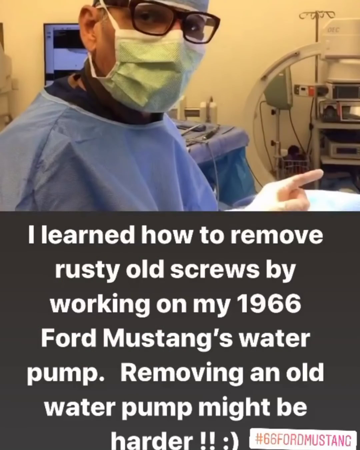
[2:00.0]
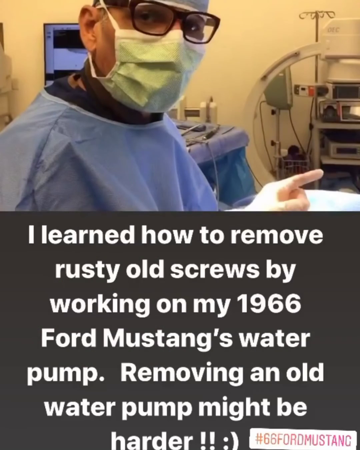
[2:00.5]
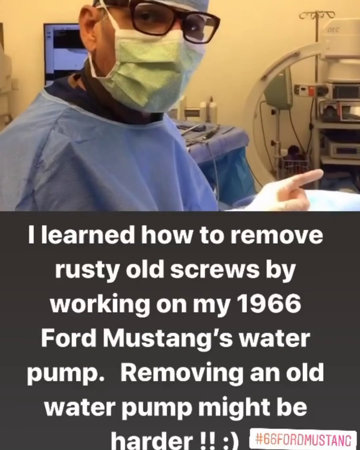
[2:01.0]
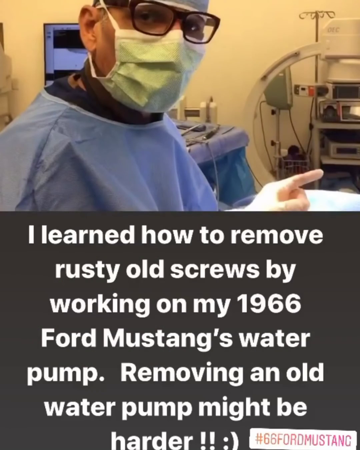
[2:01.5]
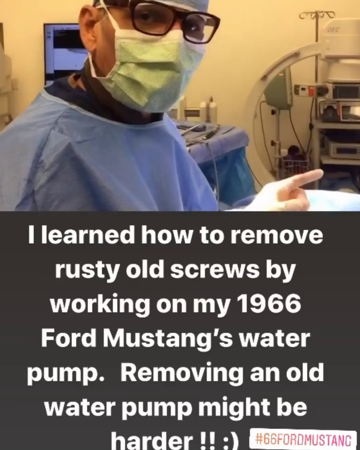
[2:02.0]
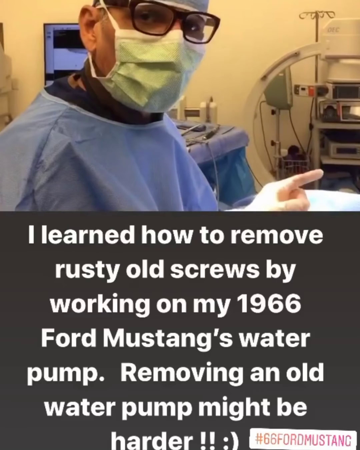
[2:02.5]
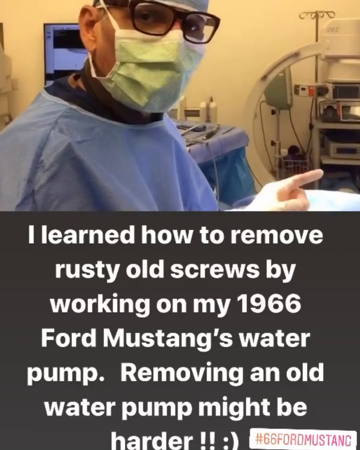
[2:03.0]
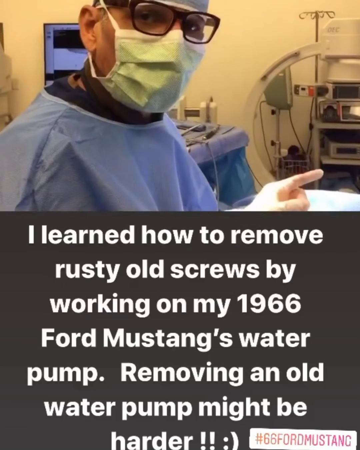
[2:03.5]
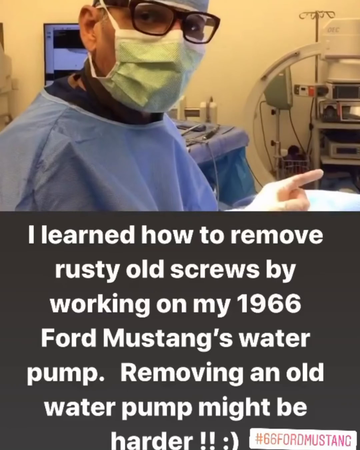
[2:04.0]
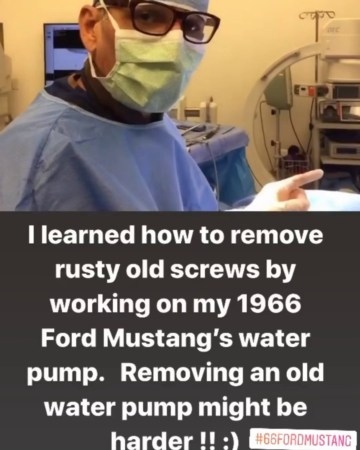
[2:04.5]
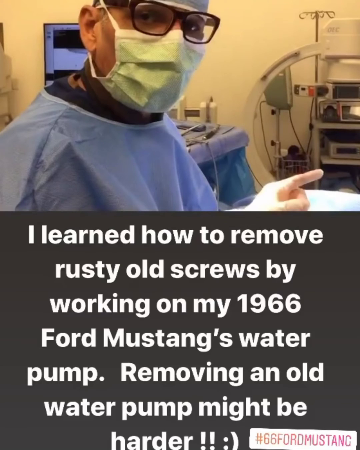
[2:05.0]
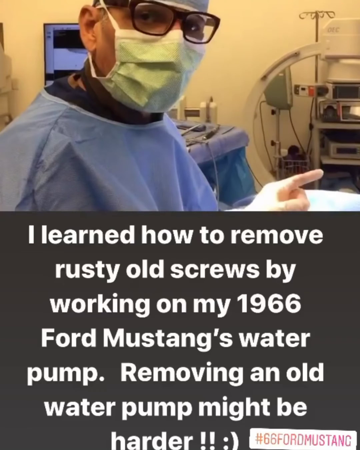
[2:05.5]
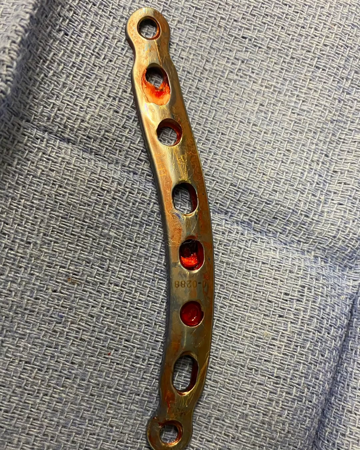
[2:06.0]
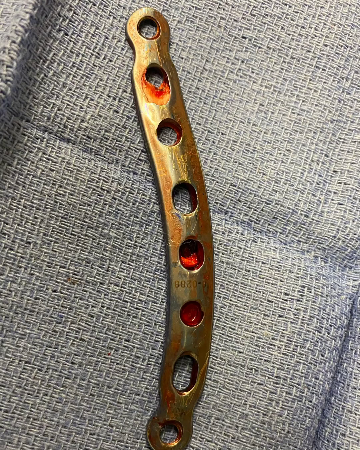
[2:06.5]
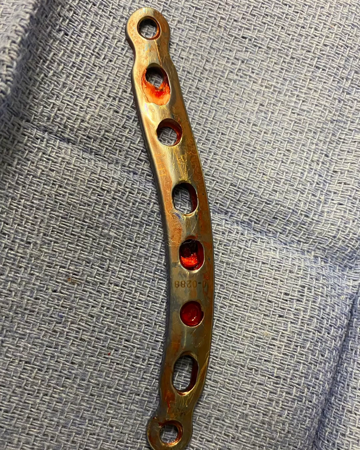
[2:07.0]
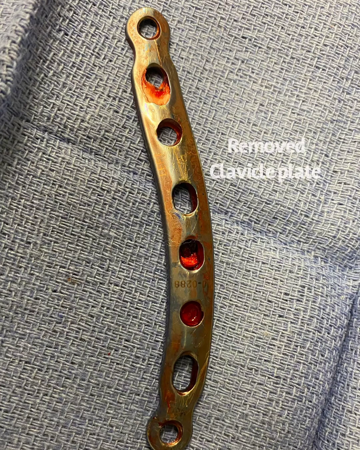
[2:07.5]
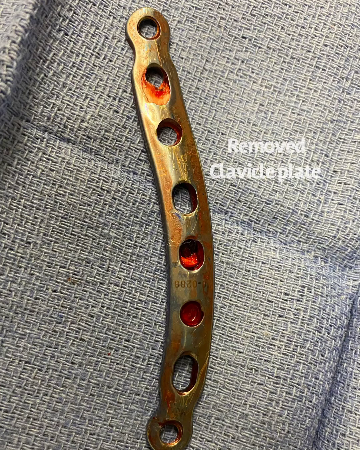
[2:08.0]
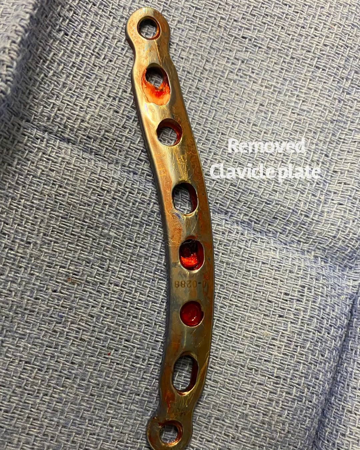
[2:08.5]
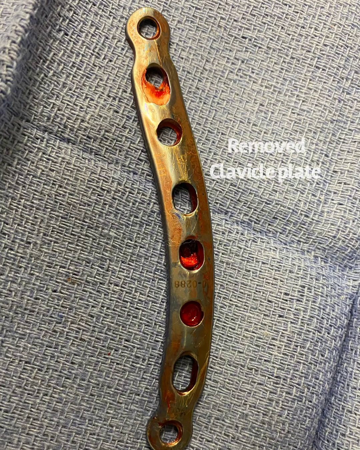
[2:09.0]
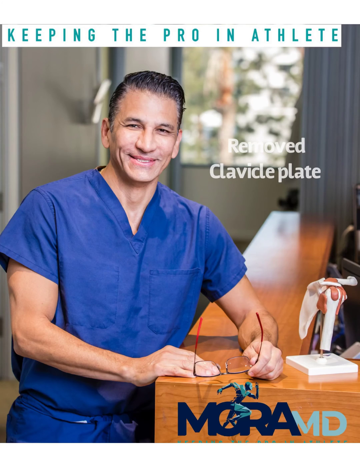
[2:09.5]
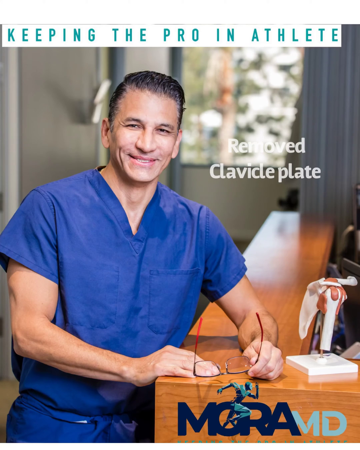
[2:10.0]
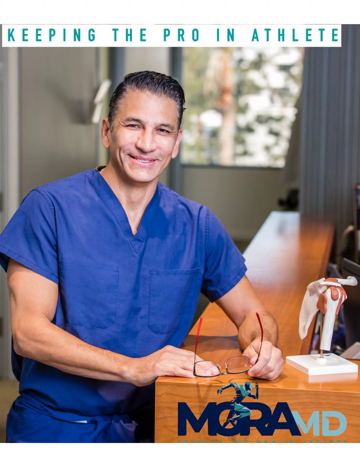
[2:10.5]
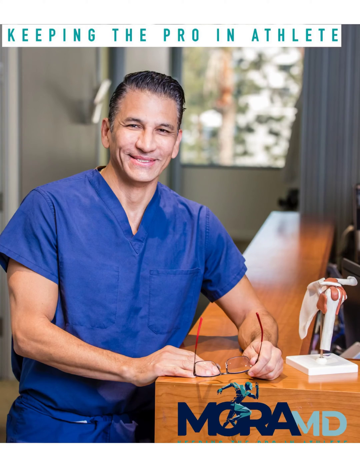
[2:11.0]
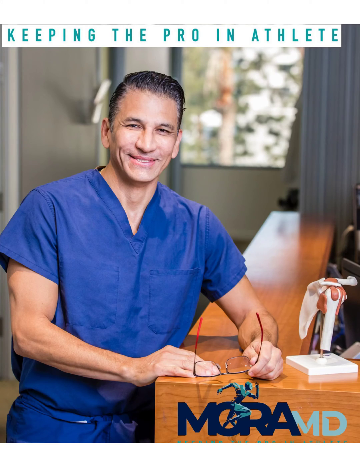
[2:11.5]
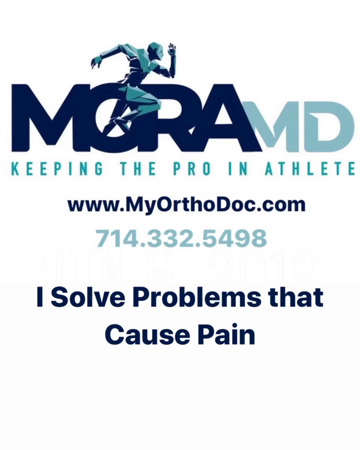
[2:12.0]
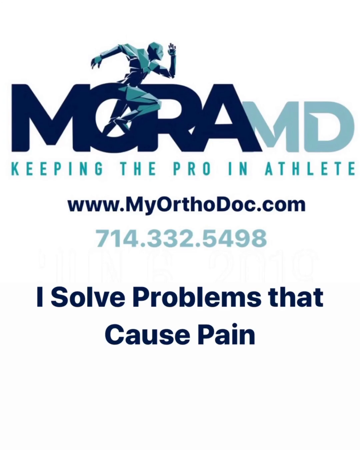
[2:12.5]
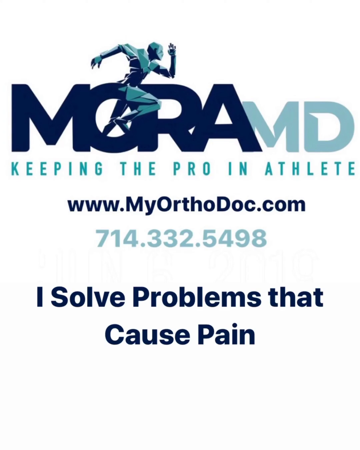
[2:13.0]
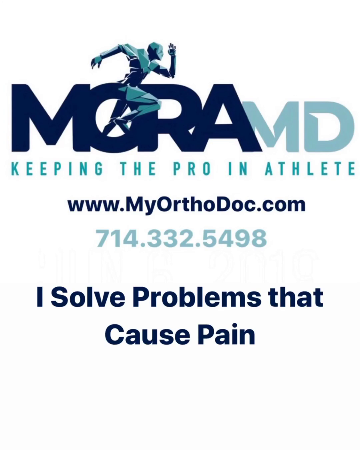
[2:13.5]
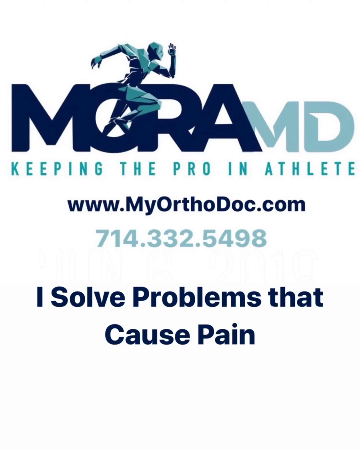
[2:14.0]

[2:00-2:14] A split screen shows a photo of the doctor on the top half and, on the bottom, text on a gray background reading "I learned how to remove rusty old screws by working on my 1966 Ford Mustang's water pump." The view transitions to a picture of the metal device pulled from the patient: a long, slender device that appears to be about two to three inches long, likely silver or gray and discolored inside the body. It has seven holes, two of them completely blocked by human tissue or blood. The device is laying on a woven blue fabric, with text next to it reading "removed clavicle plate." A still shot then shows the doctor, probably Dr. Mora, standing in blue scrubs and leaning on a wooden shelf or desk, holding glasses in his left hand that appear to have red arms and black frames. He is smiling. Text above him reads "keep being the pro in athlete," with "removed clavicle plate" in lighter white text. Beyond him is a window and a blue curtain that appears to be open, and a notepad is visible on the desk. The video transitions to a text card reading "Mora MD, keeping the pro and athlete," where within the O and R of Mora is a figure that appears to be running, right leg up, left leg down, right arm extended back, left arm extended forward and raised at the elbow. The doctor's website "myorthodoc.com", the phone number "714-332-5498" and what appears to be a tagline, "I solve problems that cause pain," are shown. The doctor appears to work with athletes.